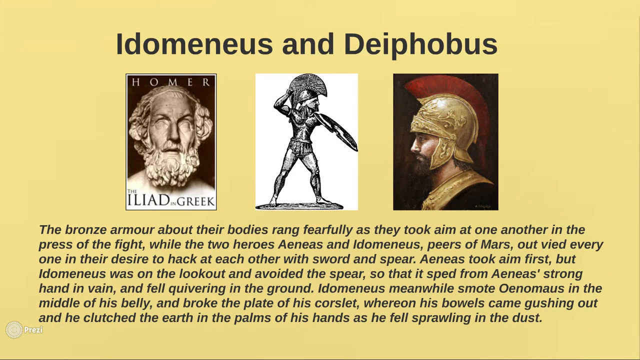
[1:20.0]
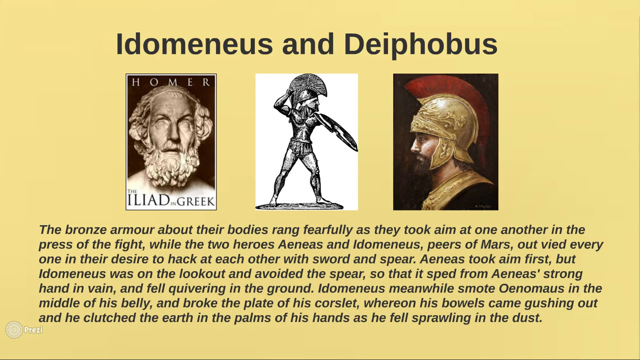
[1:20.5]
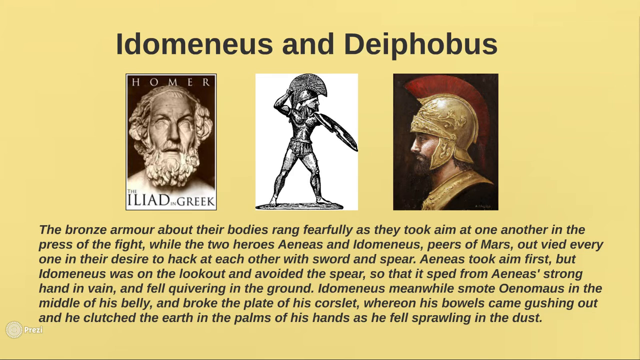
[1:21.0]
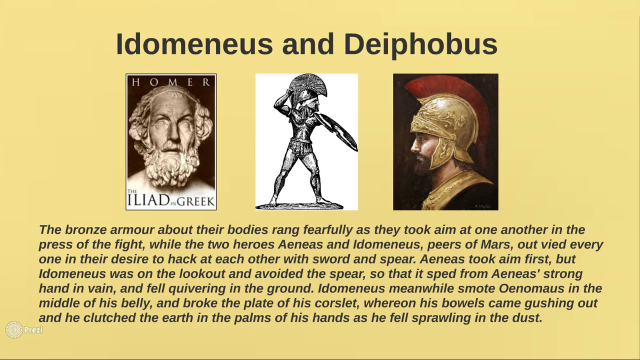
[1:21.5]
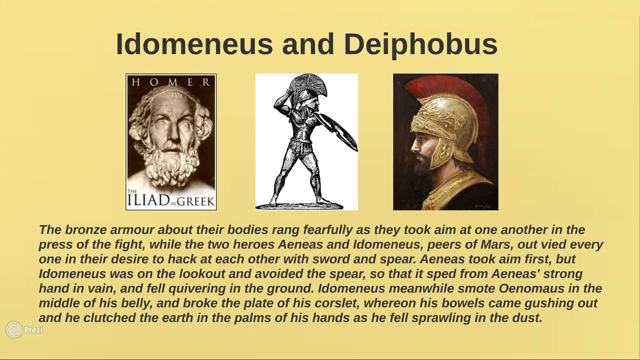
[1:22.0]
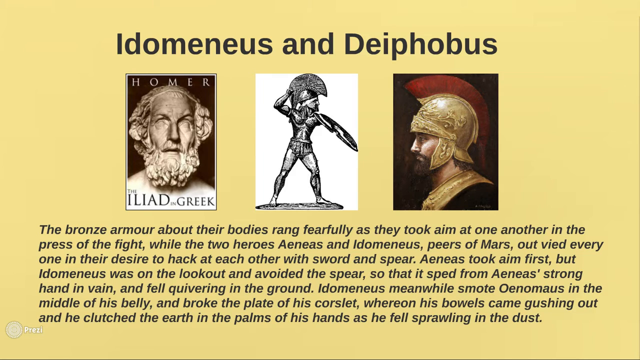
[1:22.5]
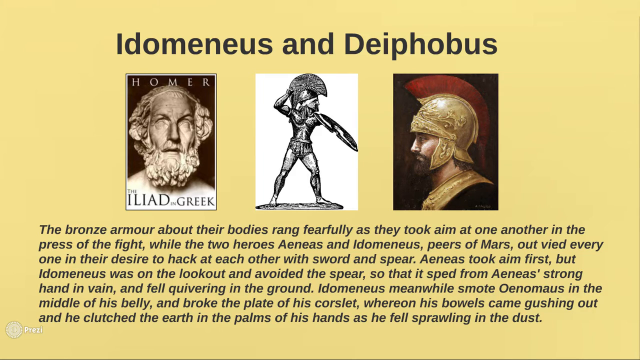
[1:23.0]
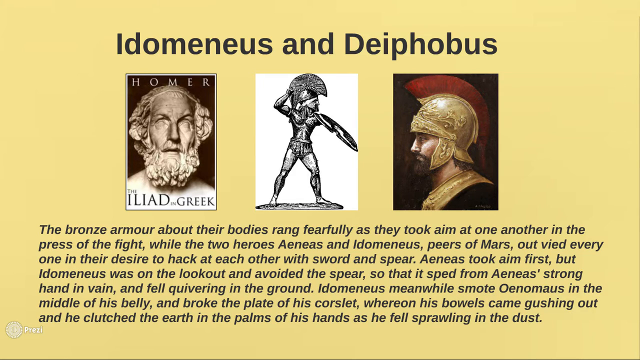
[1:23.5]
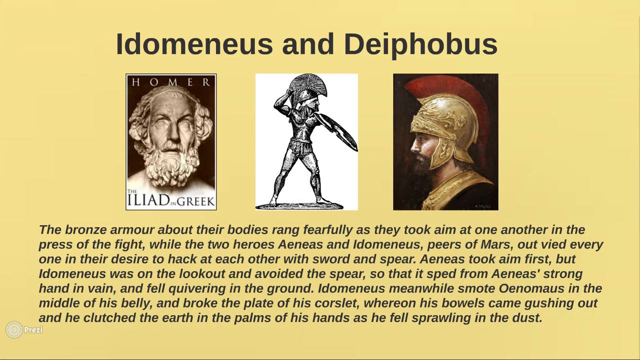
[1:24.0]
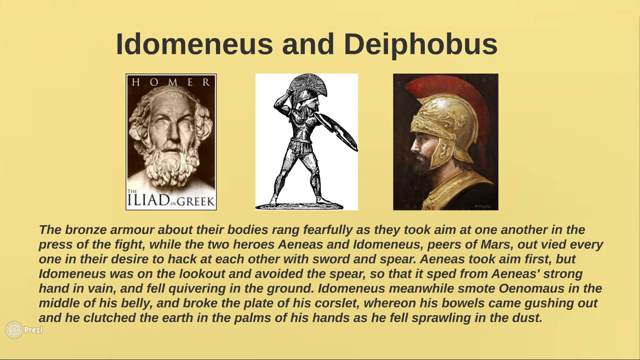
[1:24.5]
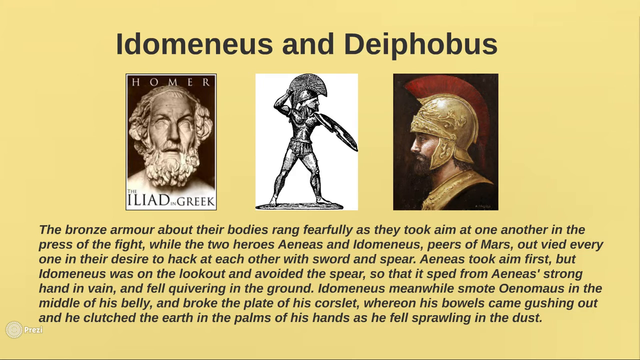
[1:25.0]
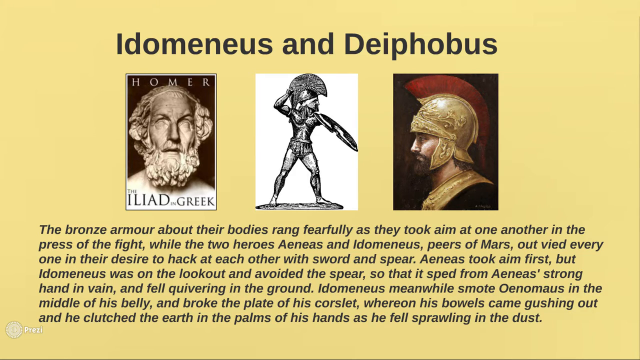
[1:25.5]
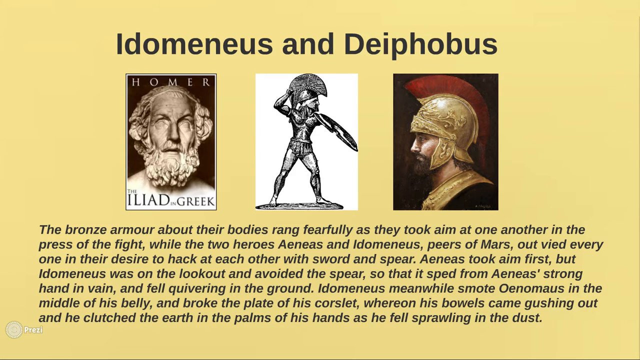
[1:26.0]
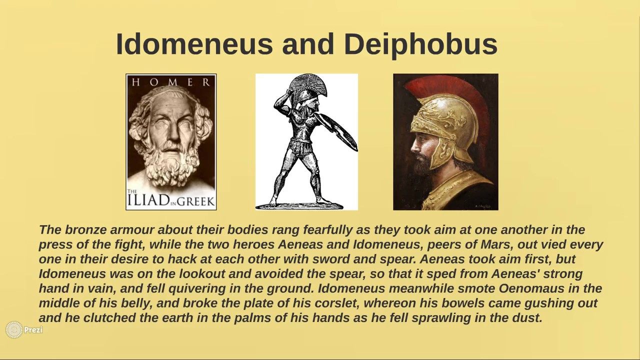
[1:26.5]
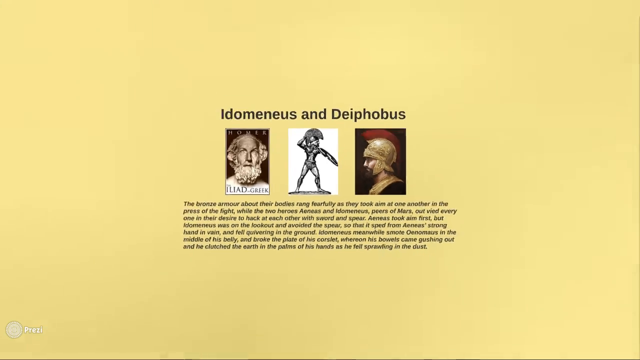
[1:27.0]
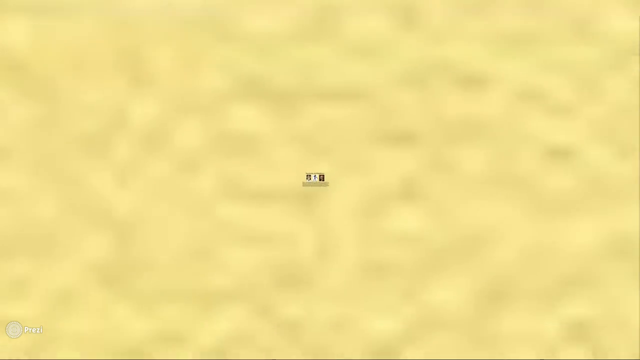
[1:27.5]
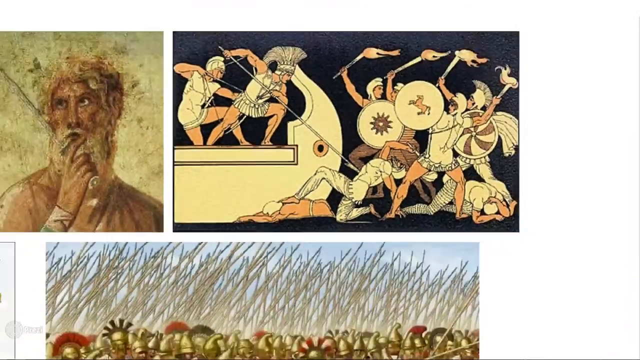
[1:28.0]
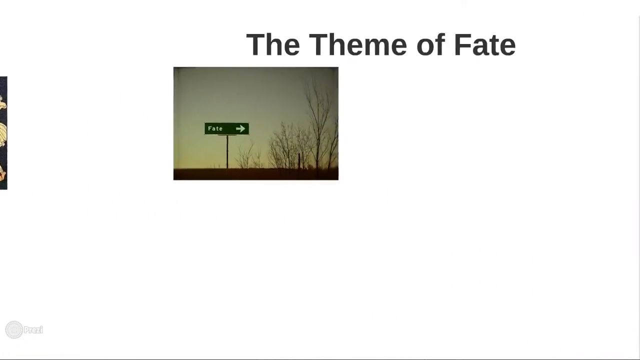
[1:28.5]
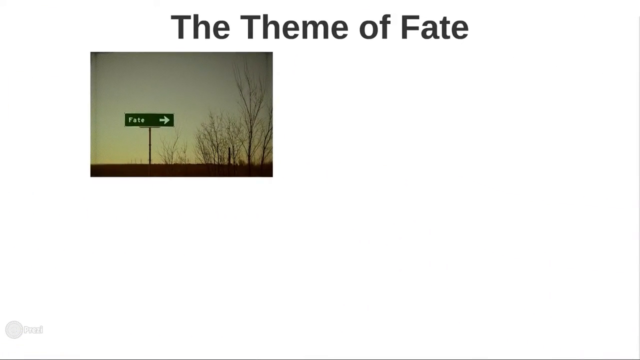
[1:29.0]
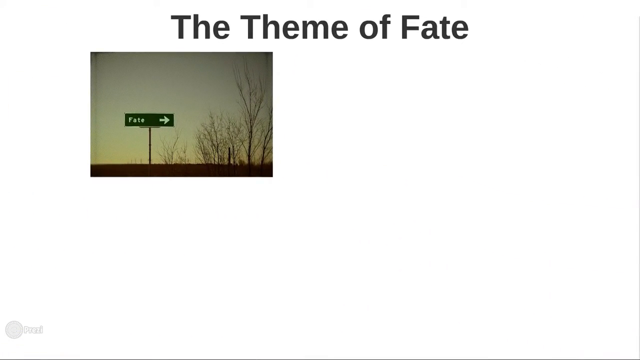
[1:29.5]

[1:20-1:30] Against a brown-beige background, a title at the top reads "Indomenous and Dephobos". Below are three pictures. The first, in its own small rectangle, is Homer the Iliad in Greek. The second, in the center section, has a white background and a black and white warrior with a shield standing, posed to fight. The third shows a warrior with a gold hat topped by a red mohawk, a brown beard, and a gold neck plate; the rest of his outfit appears dark. Under the pictures, text reads "the bronze armor about their bodies rang fearfully as they took aim at one another in the press of the fight", which appears to be an excerpt from one of the books. The view then zooms in and brings up a screen titled "theme of fate".